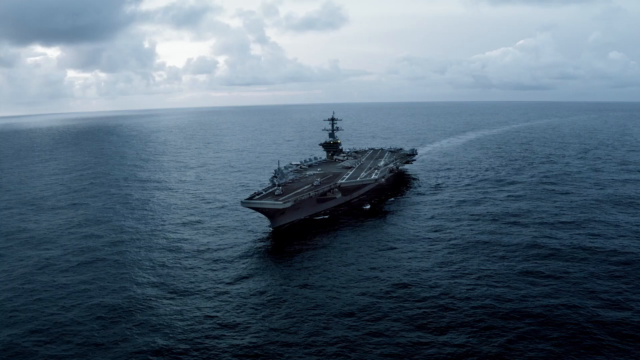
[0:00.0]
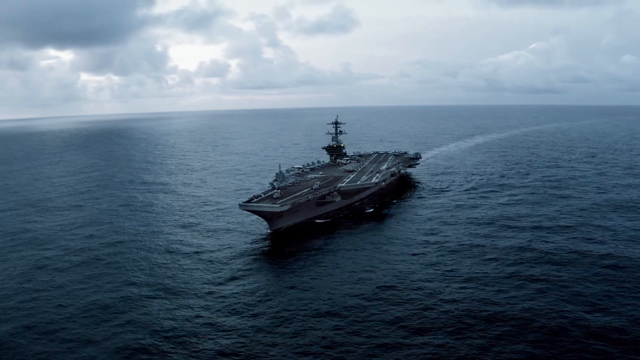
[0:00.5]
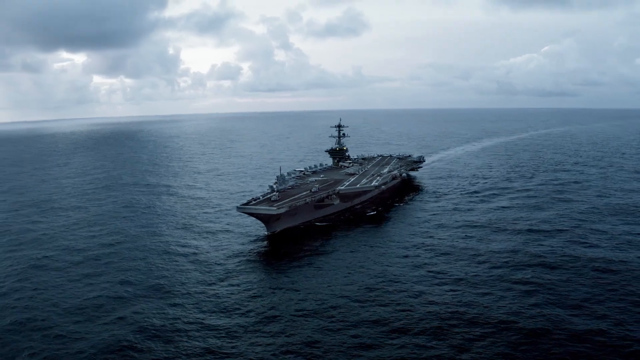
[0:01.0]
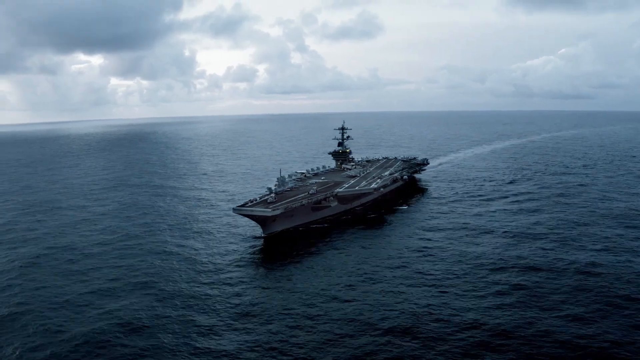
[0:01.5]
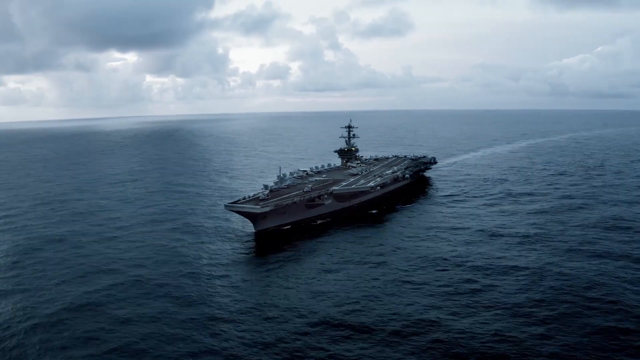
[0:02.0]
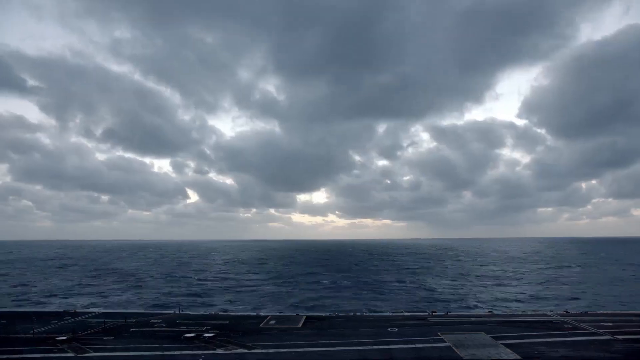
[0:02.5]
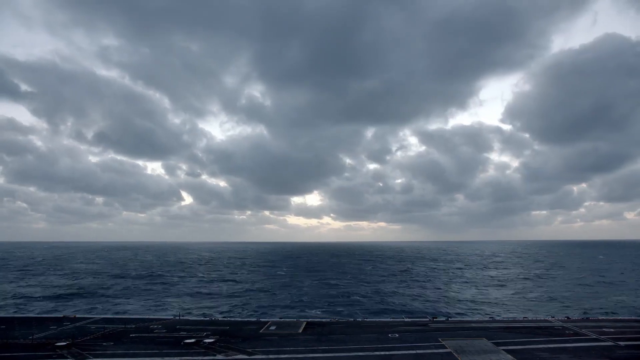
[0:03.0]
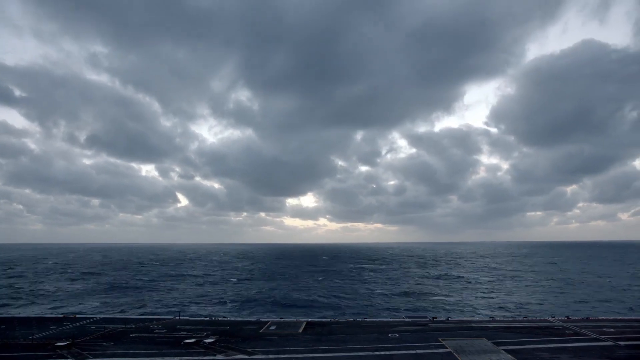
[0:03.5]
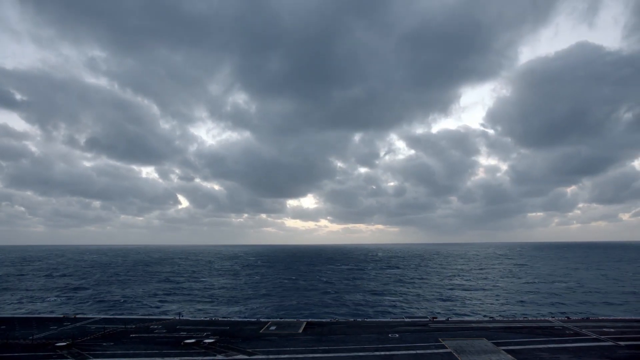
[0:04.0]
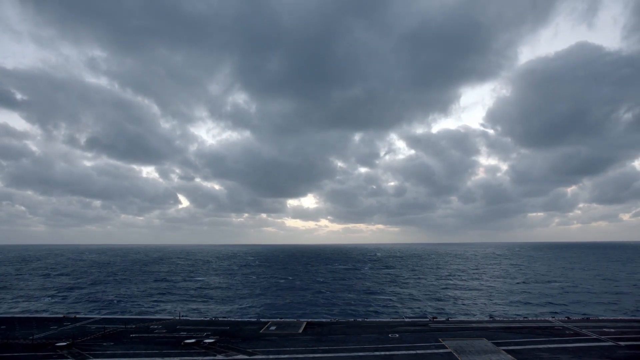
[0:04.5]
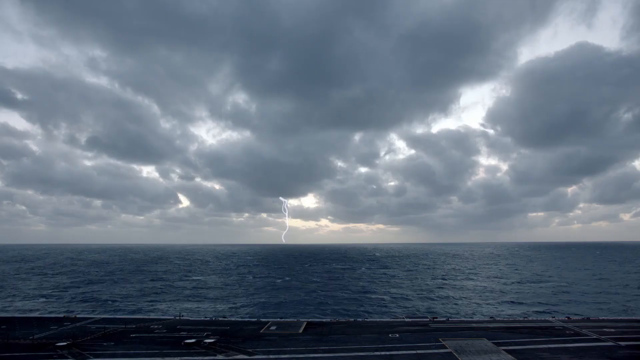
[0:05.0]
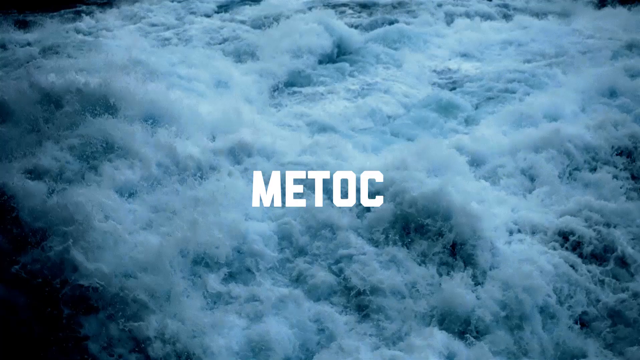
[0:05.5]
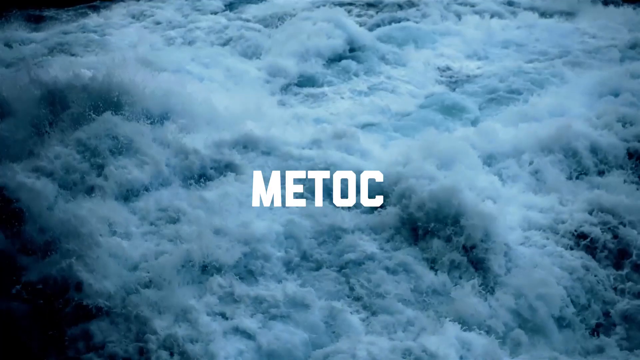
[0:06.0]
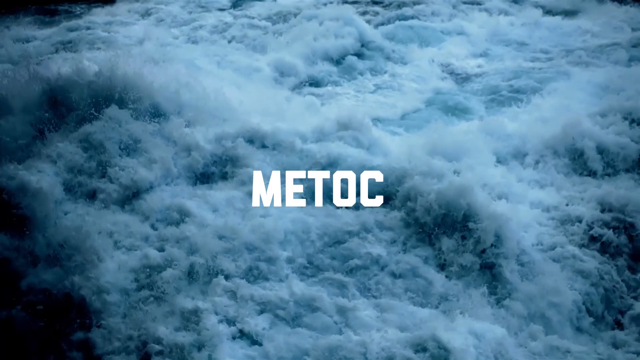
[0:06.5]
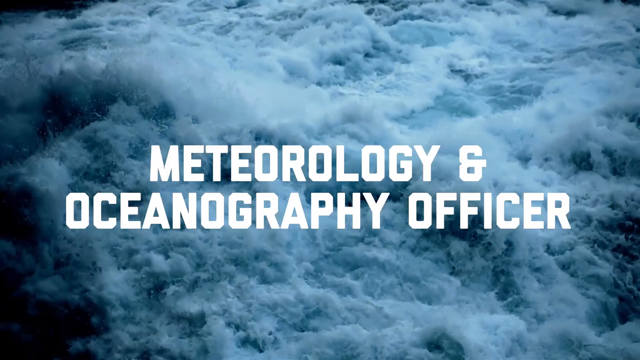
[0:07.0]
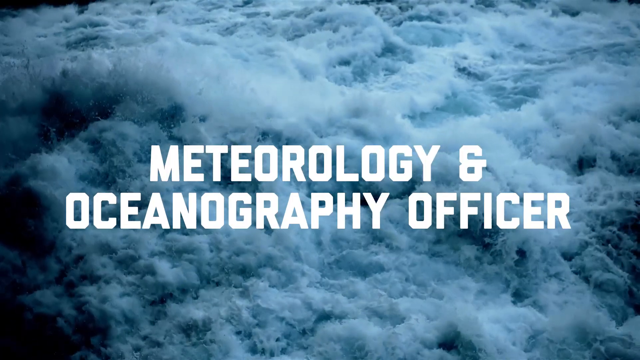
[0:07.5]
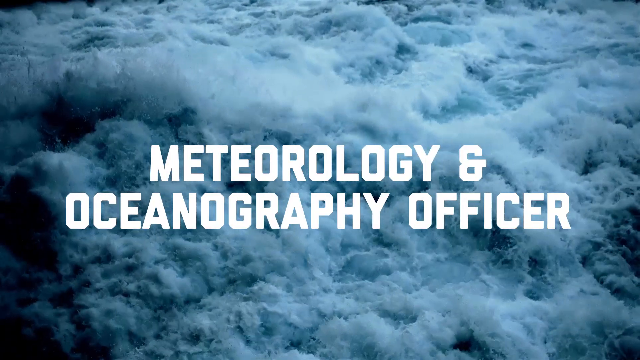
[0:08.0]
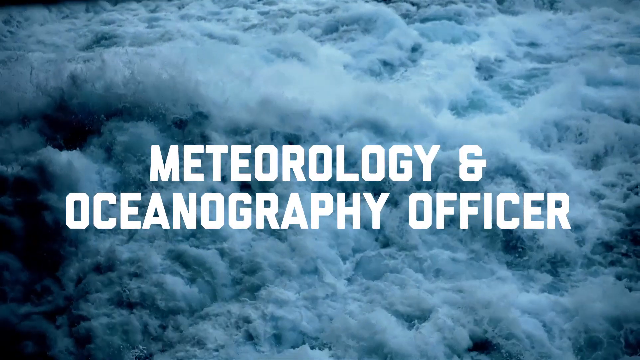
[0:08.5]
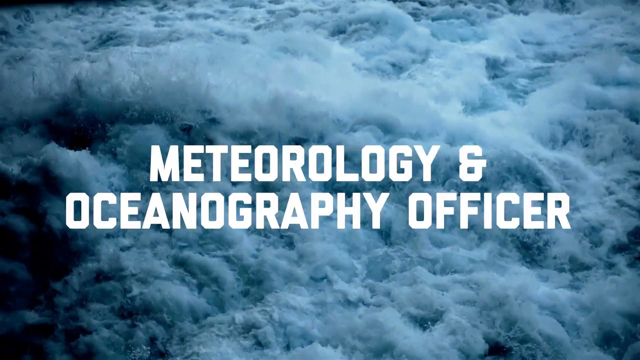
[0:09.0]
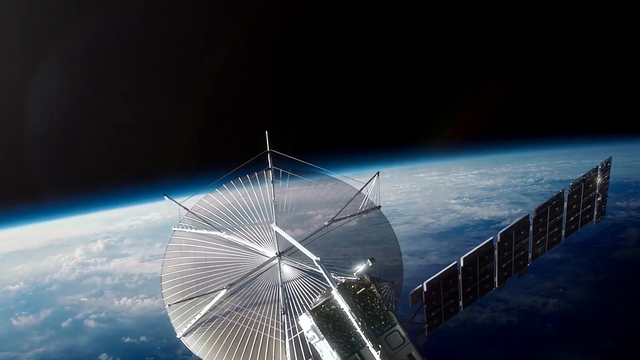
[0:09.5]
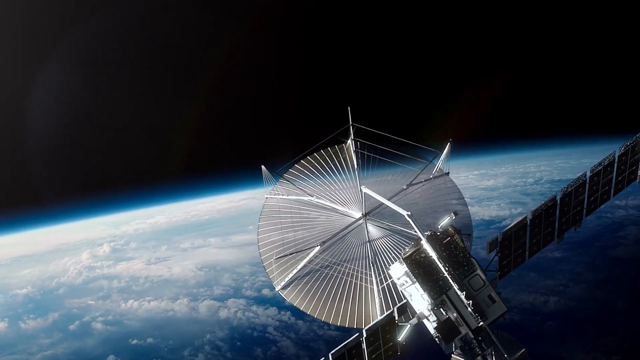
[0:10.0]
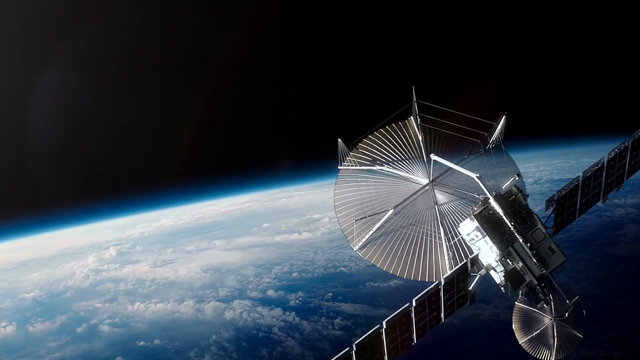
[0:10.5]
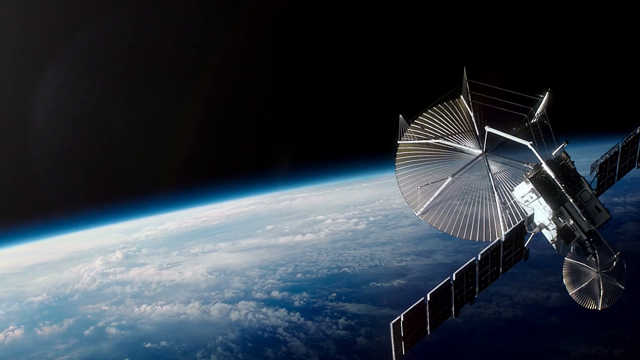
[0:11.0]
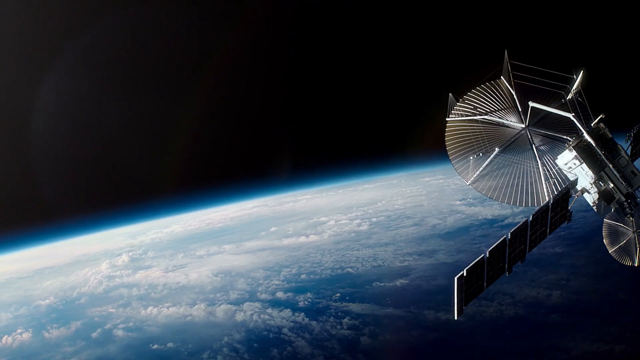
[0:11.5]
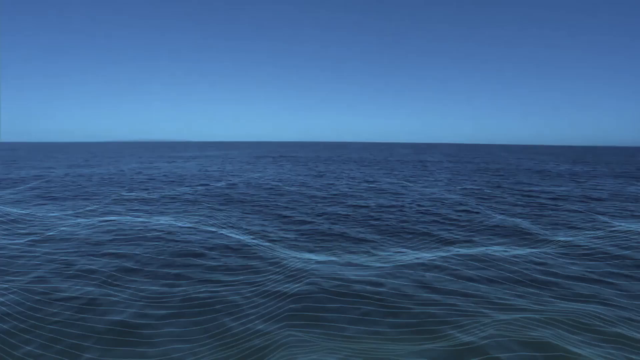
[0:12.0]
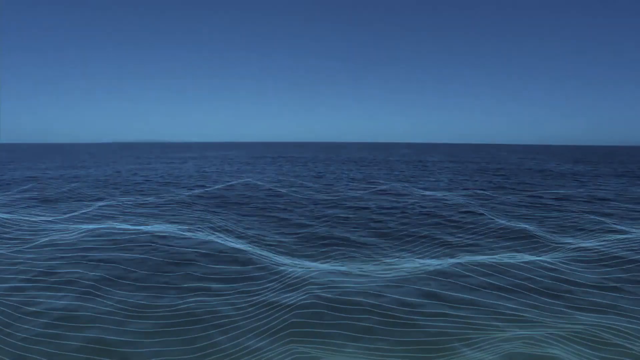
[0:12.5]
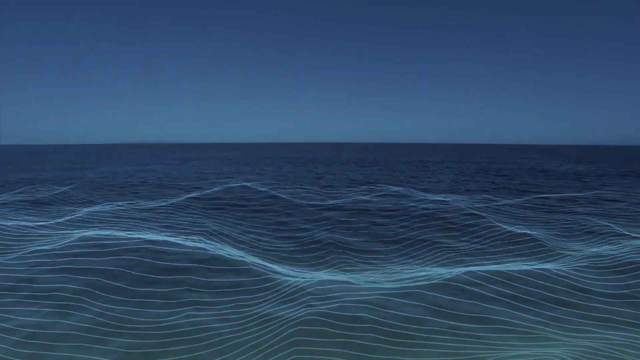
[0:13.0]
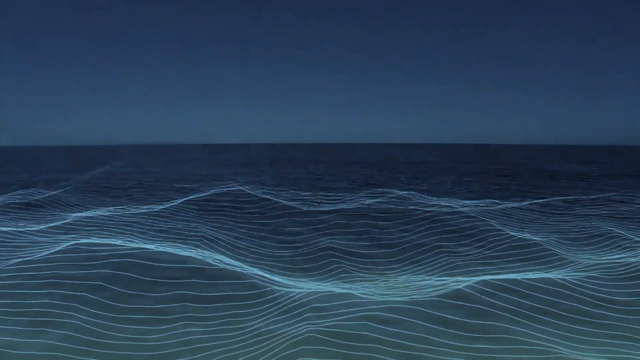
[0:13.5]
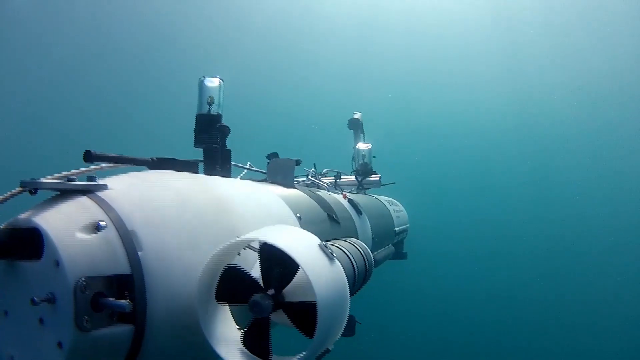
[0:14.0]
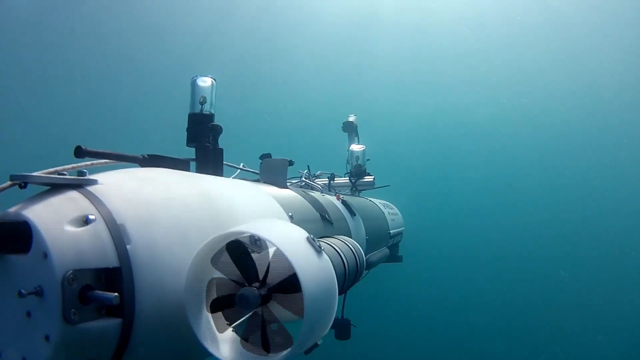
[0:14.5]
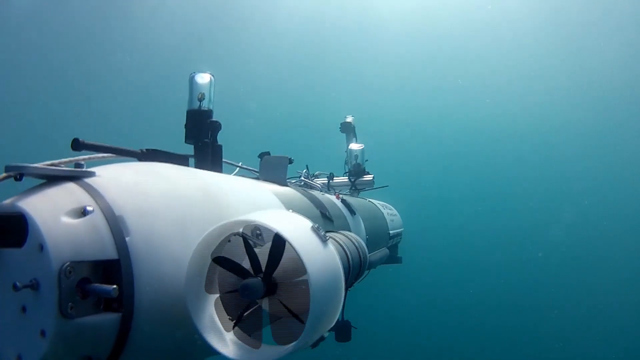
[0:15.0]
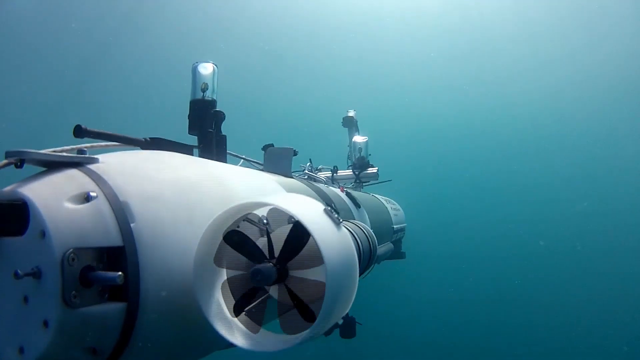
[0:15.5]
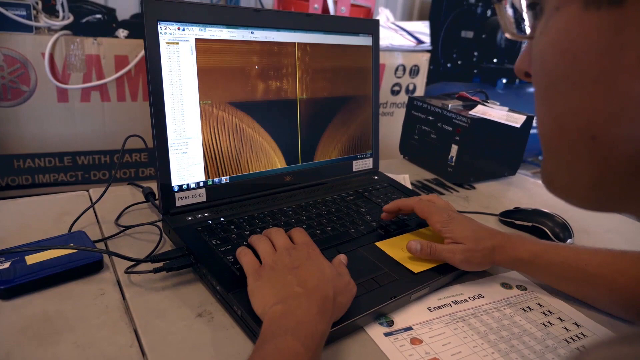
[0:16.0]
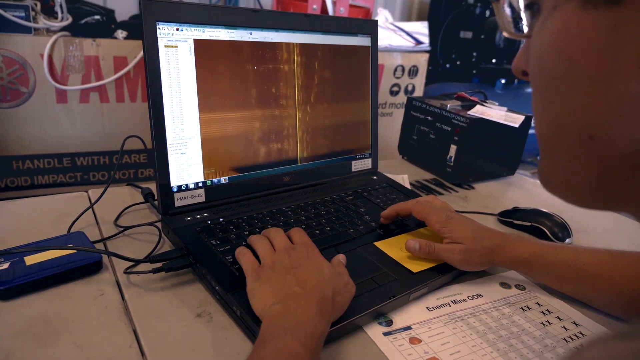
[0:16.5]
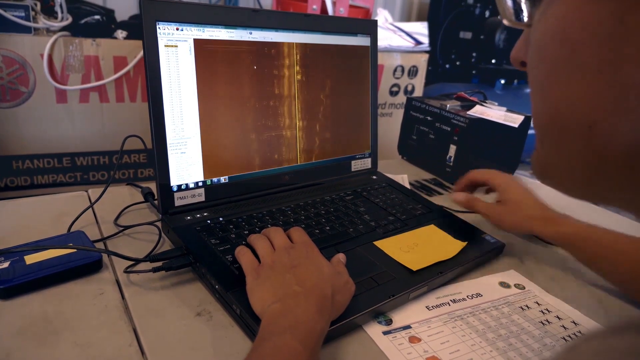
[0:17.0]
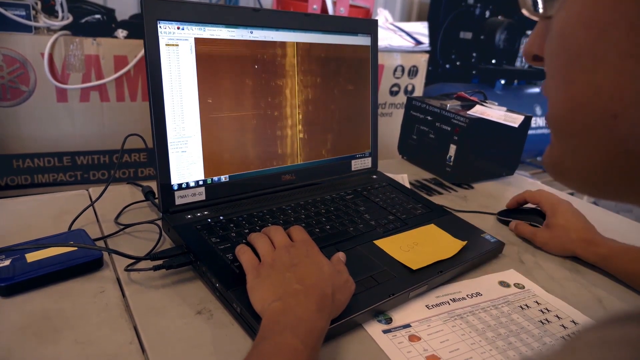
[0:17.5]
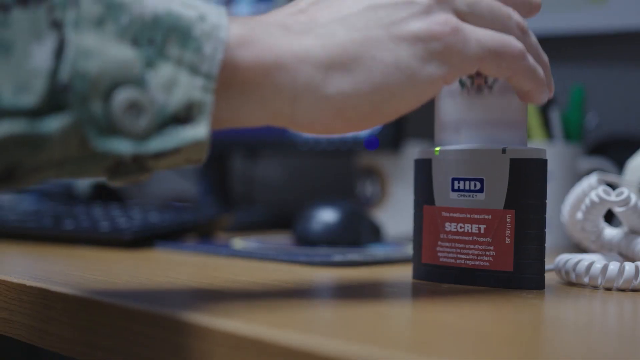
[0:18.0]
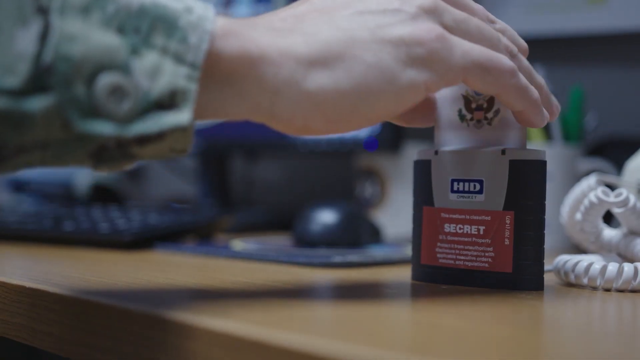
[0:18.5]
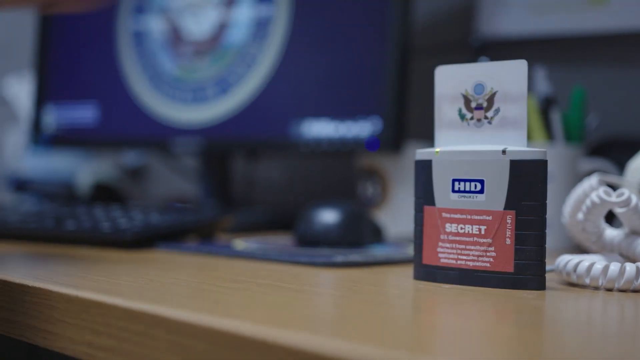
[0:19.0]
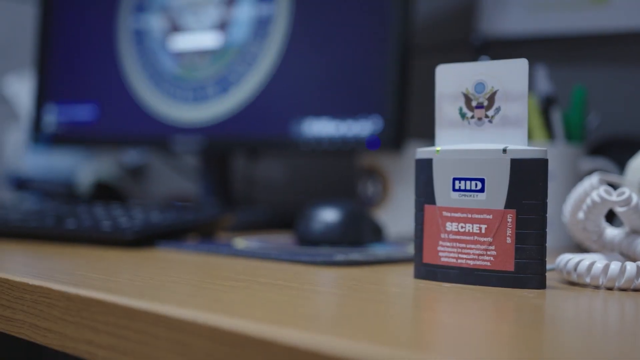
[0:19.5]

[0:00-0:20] A very large ship appears, and the fast-moving footage seems to circle around it under stormy-looking clouds. Flashing text reading "Metoc" appears with waves beneath it, and the text then expands to read "meteorology and oceanography officer," spelling out what it stands for. A satellite is shown in the sky, followed by waves and a machine underwater. The video then cuts to a young man at a laptop, looking at what appears to be some sort of view related to the ship. The footage is fast and chaotic, with a lot going on.